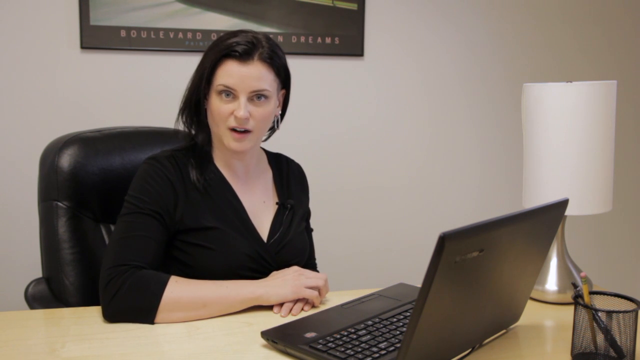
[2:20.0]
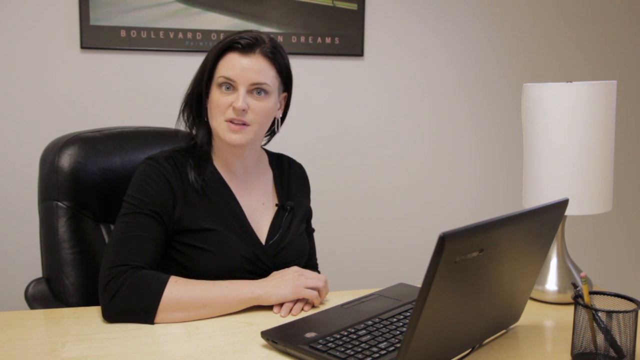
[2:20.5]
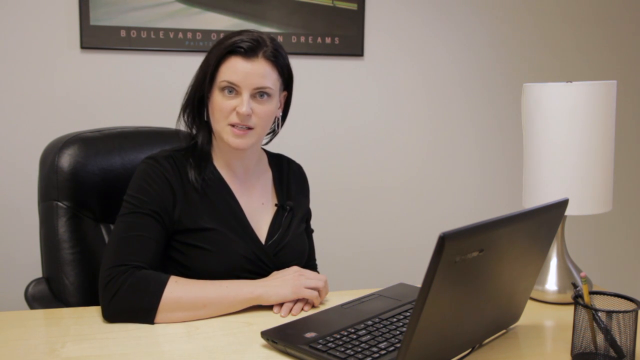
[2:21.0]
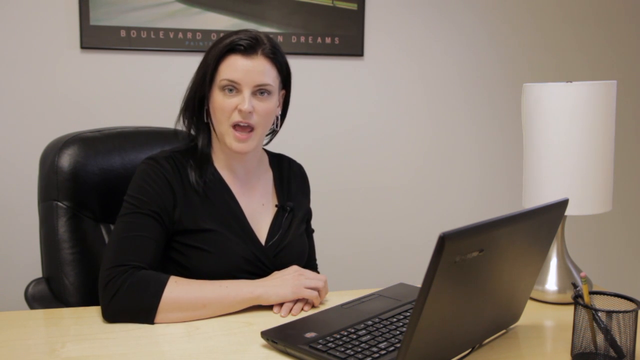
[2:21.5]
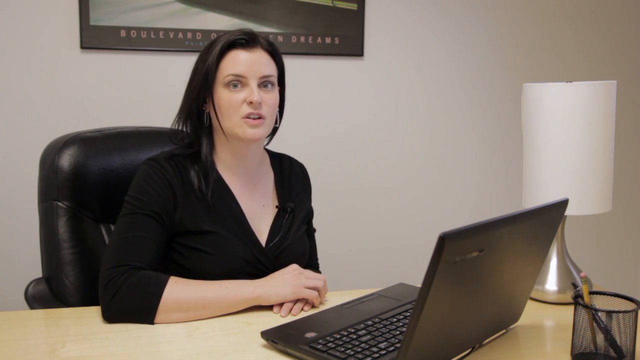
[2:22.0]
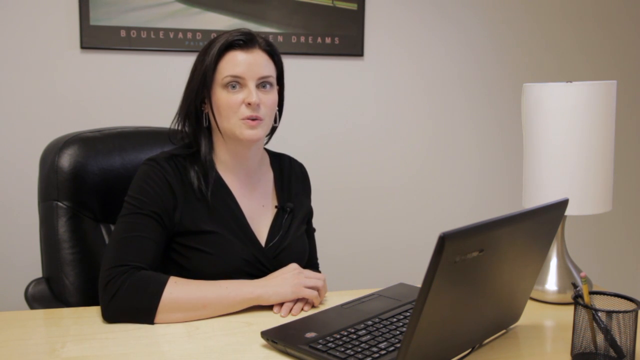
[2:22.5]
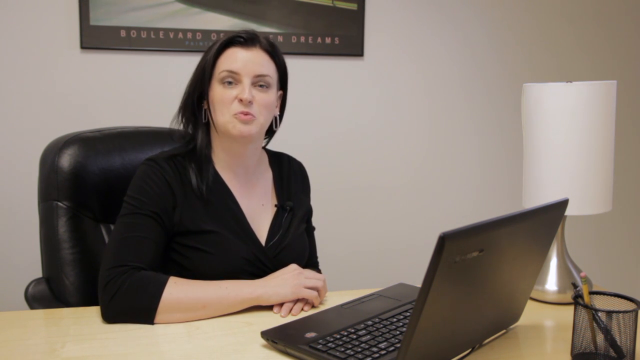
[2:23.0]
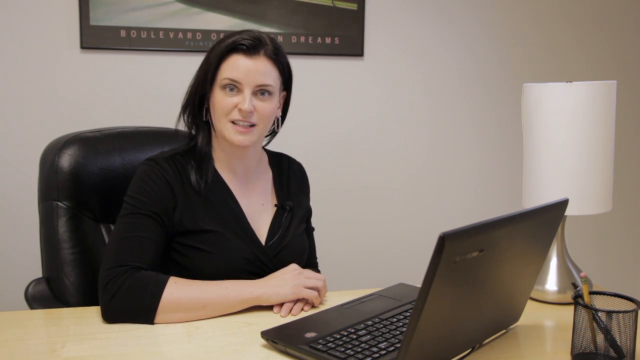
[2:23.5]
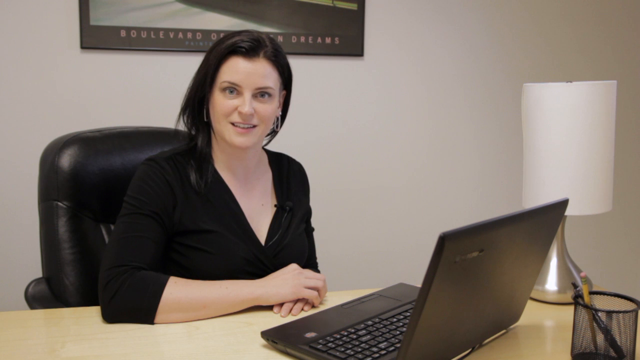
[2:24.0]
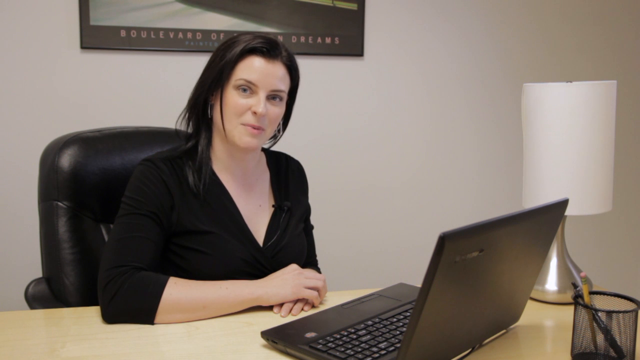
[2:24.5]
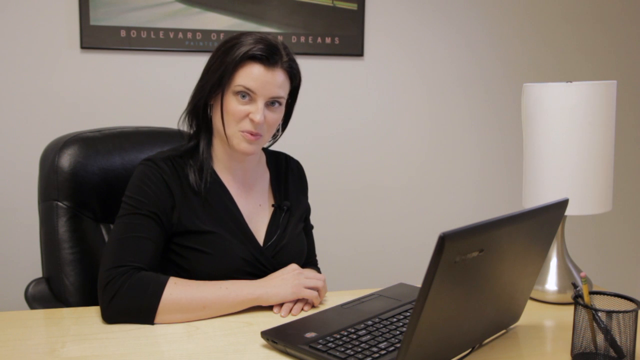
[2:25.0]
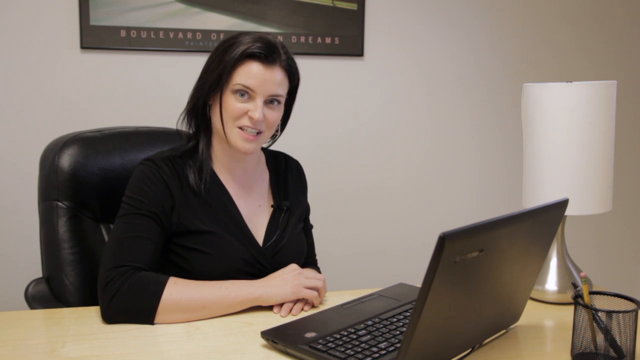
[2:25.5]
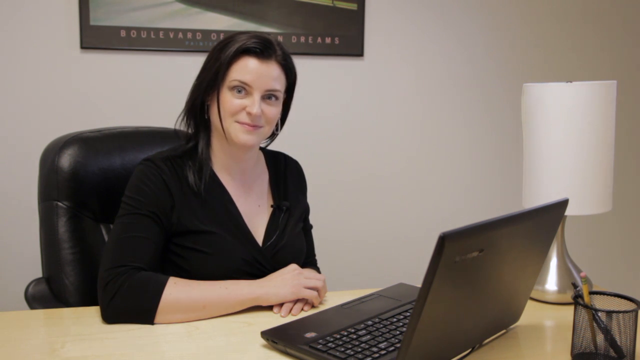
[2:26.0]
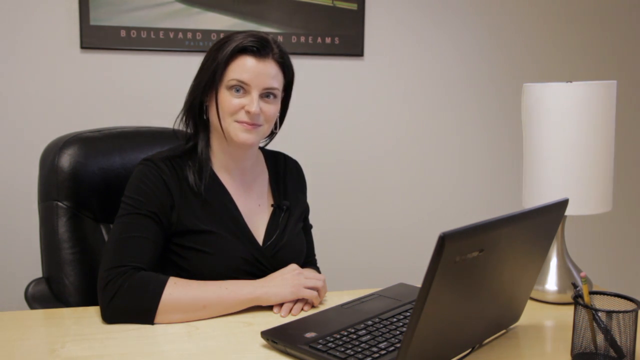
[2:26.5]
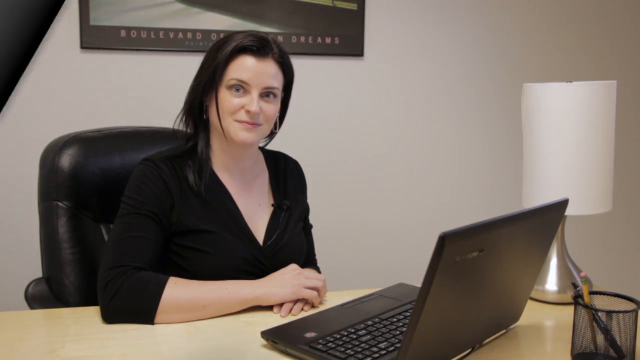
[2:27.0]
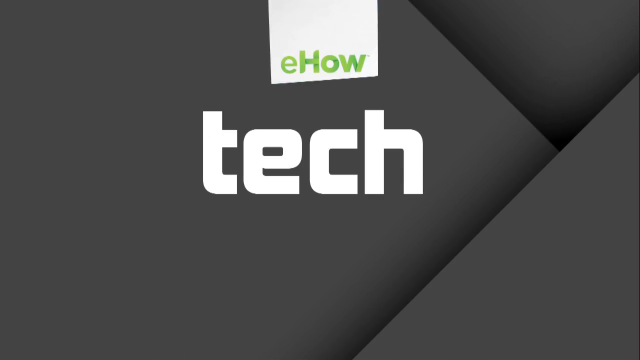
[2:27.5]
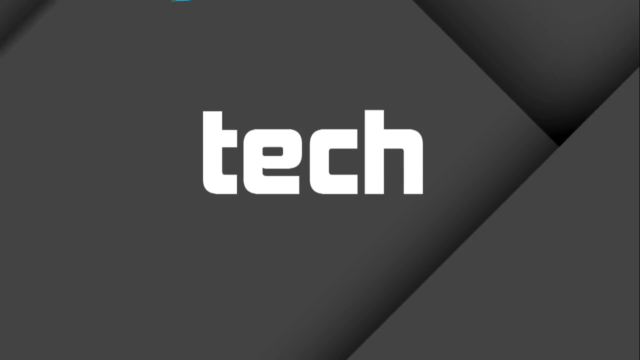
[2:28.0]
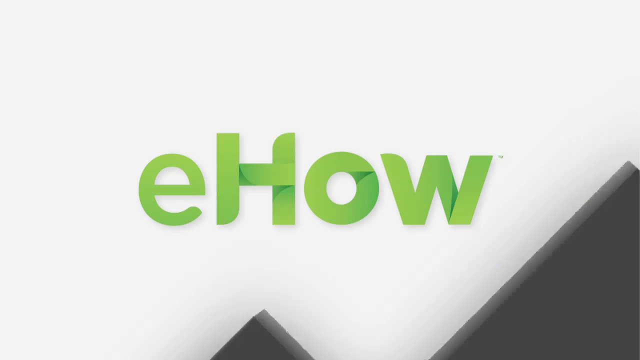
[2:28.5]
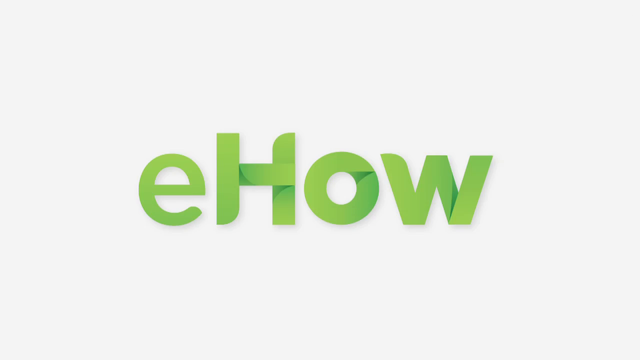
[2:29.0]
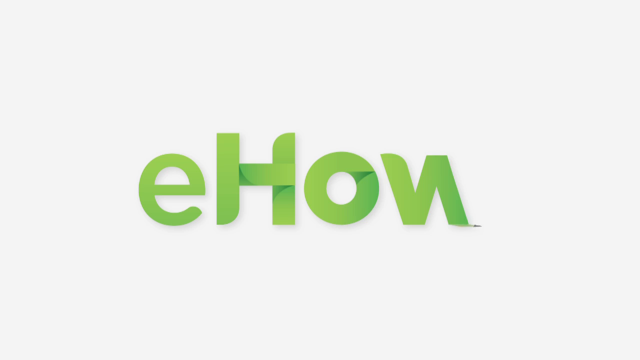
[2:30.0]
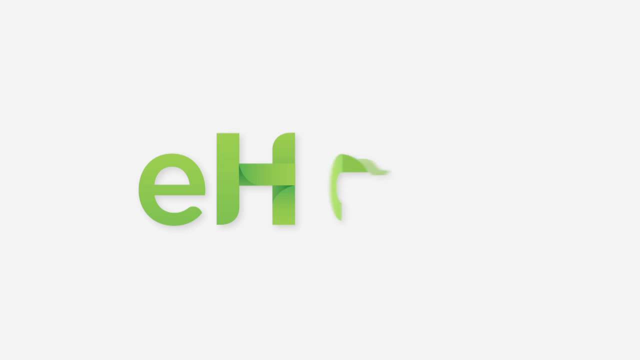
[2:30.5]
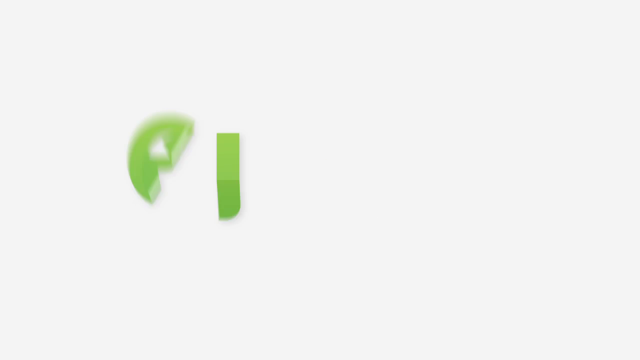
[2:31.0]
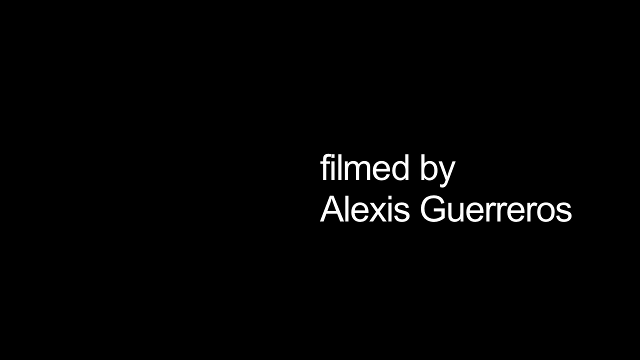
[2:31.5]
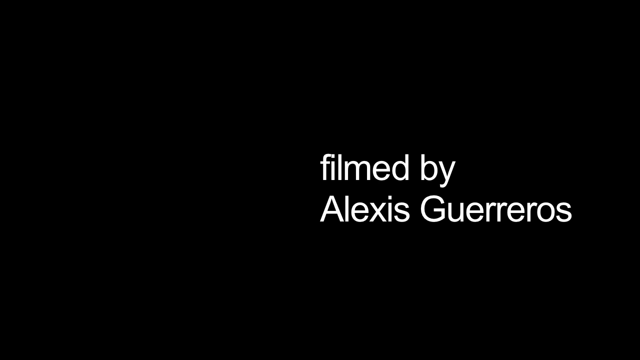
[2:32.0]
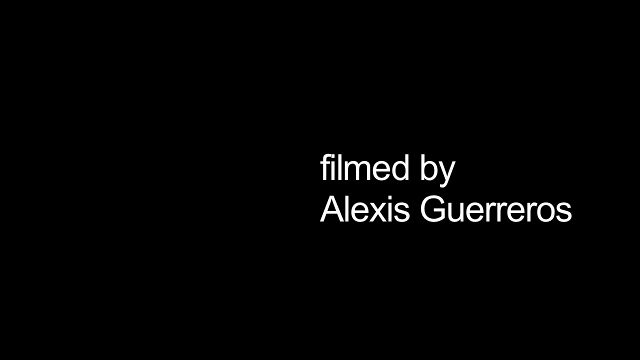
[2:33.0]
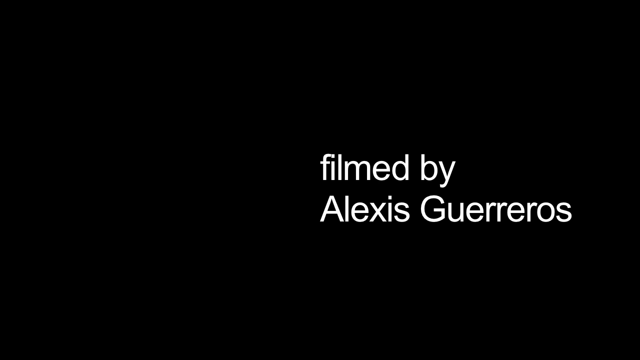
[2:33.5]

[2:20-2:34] A woman works at her desk, sitting alone in a leather chair at an open laptop. She is turned to the right and speaks to the camera with her hands crossed, one on top of the other, and her head tilted a little to the right. A contemporary lamp with an oval lampshade is next to her, and a picture is behind her. Her loop earrings are clearly visible, and her long brown hair is tucked over to the right side of her shoulder. A black screen shows the title "Tech," eHow, and "filmed by Alexis Guerreros."